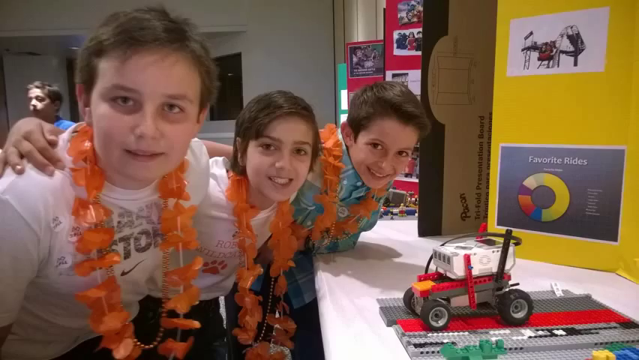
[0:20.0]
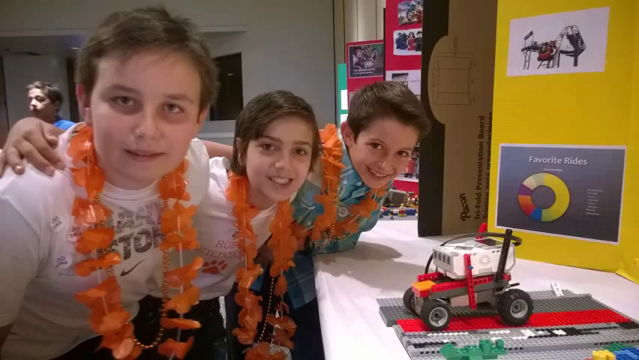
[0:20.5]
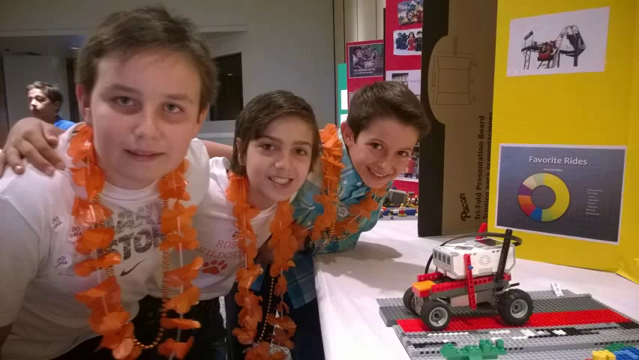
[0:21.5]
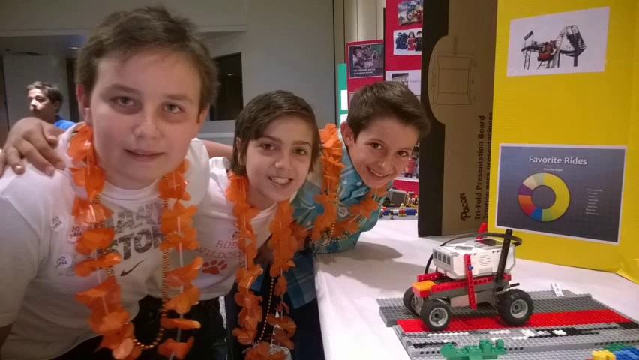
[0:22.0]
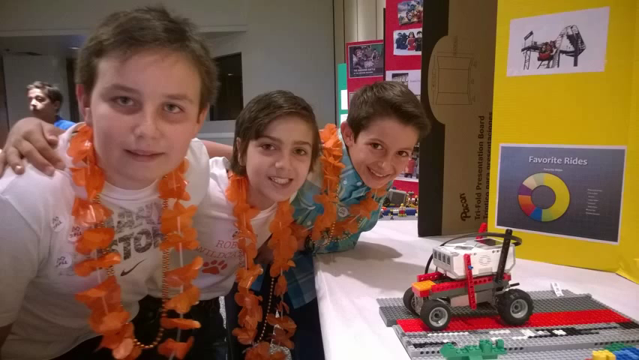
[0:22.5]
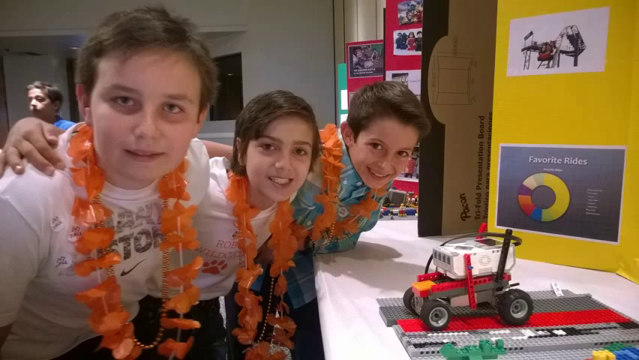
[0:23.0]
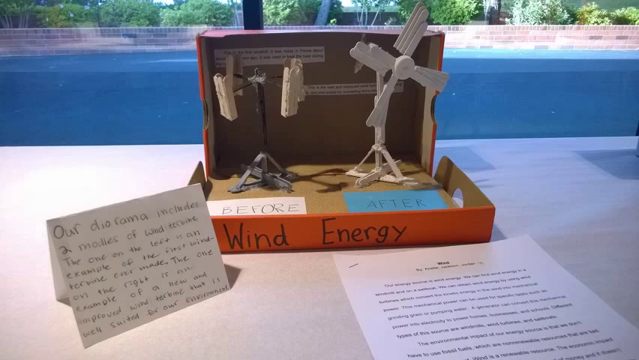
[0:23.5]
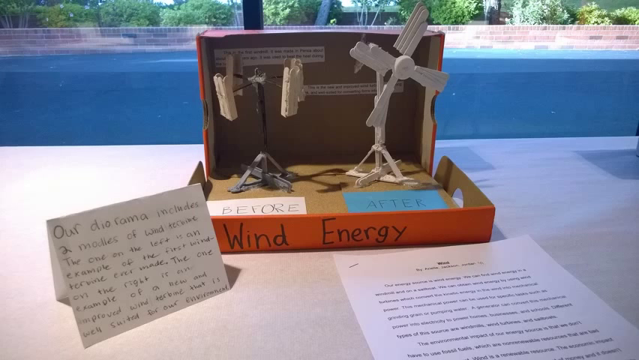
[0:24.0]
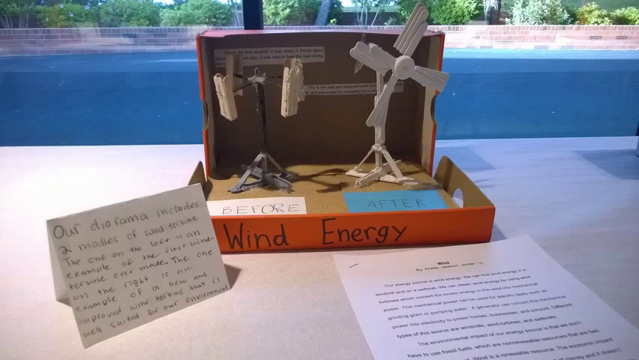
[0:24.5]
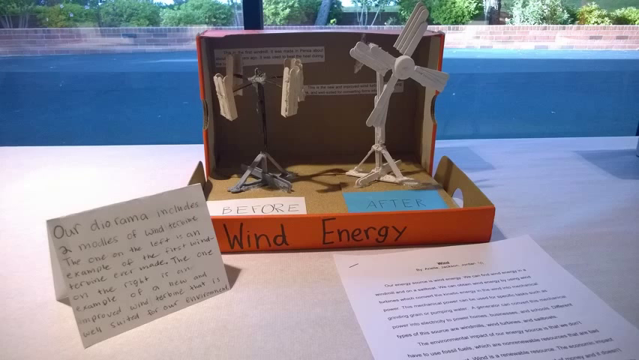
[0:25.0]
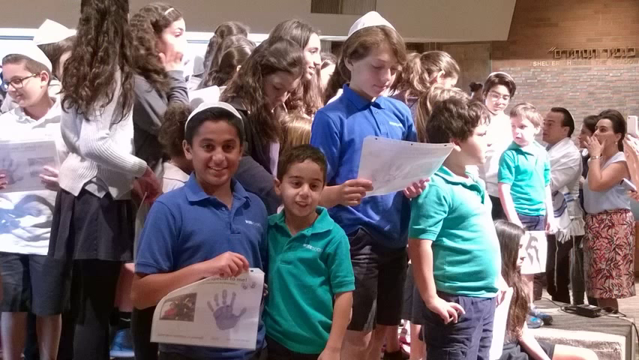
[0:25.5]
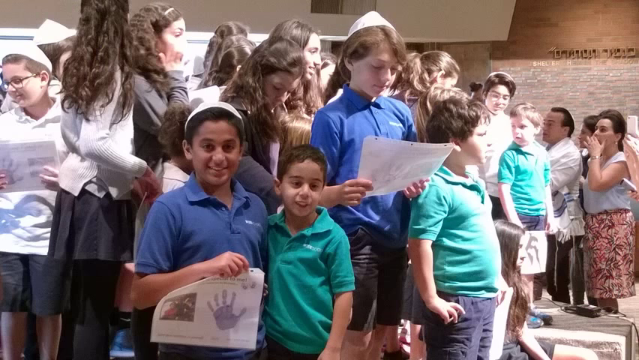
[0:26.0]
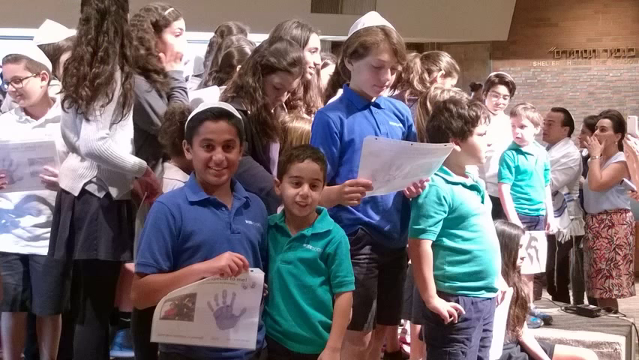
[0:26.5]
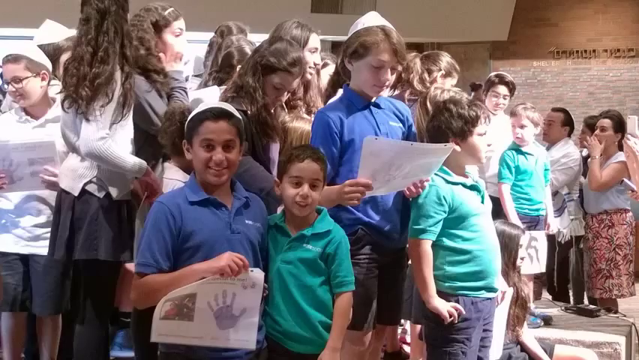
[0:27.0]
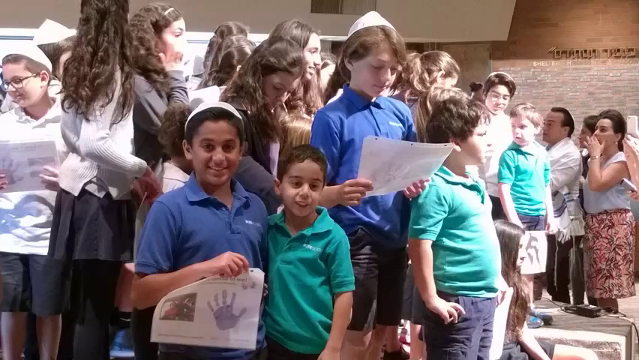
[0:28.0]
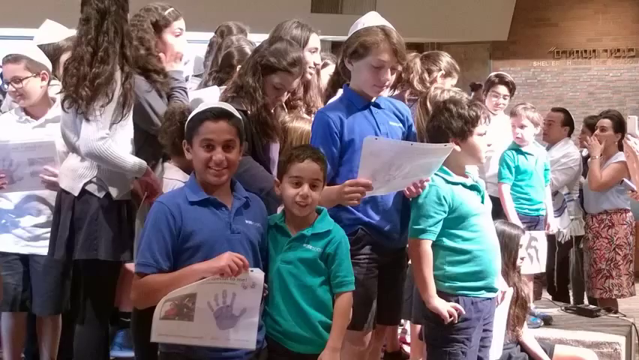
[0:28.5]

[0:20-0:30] A static image shows three kids, probably around 10 to 12. The first two wear white t-shirts with logos on their chests: the one on the left has gray and black text with a Nike logo at the bottom, and the next has red text with a red paw print at the bottom. The third wears a teal-like plaid shirt in teal, various shades of blue, and white. They have their arms around each other's shoulders and lean in, toward roughly five o'clock, but their heads are turned right so they look at the camera. All of them wear orange leis around their necks. The next picture looks like a science fair project set in a box top that appears to be the lid of a Nike shoe box, orange on the rim and upside down, with the opened shoe box visible in the background. The front of the rim reads "wind energy." Inside are two flashcards, a before and an after, the after one blue and the before one white, along with windmills.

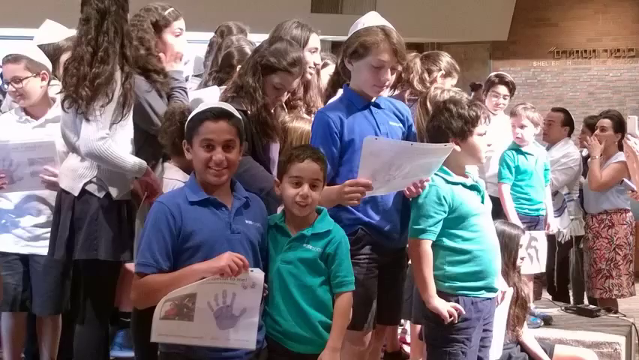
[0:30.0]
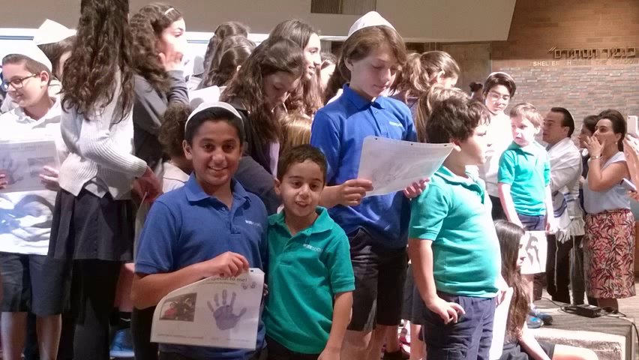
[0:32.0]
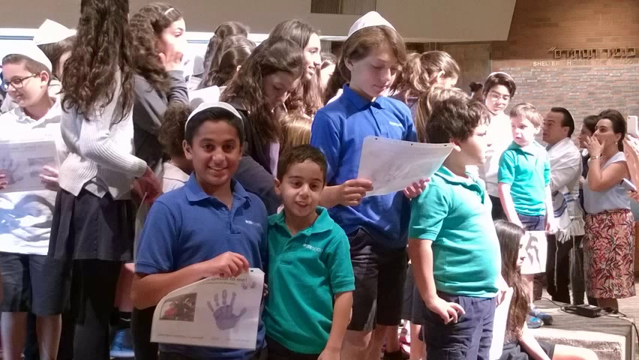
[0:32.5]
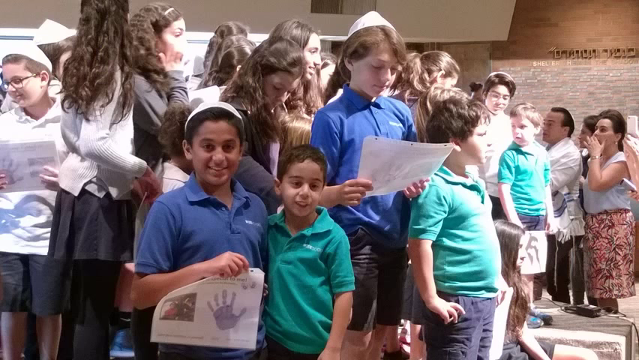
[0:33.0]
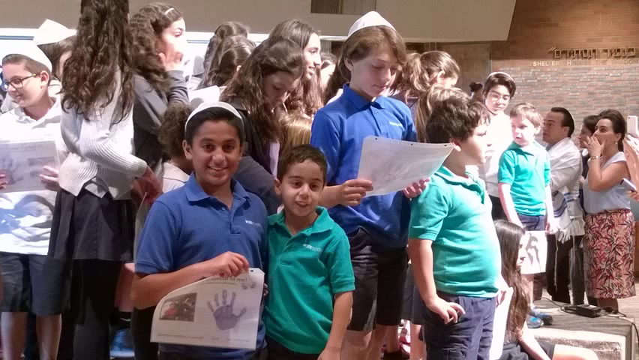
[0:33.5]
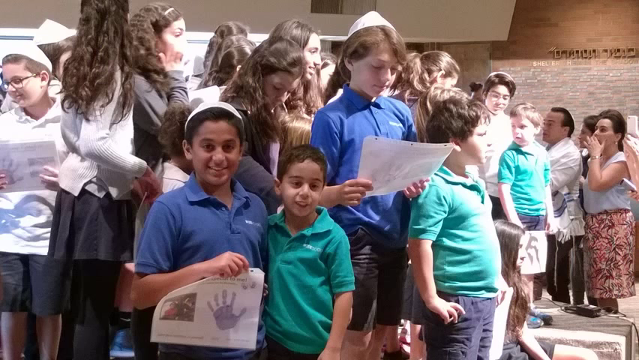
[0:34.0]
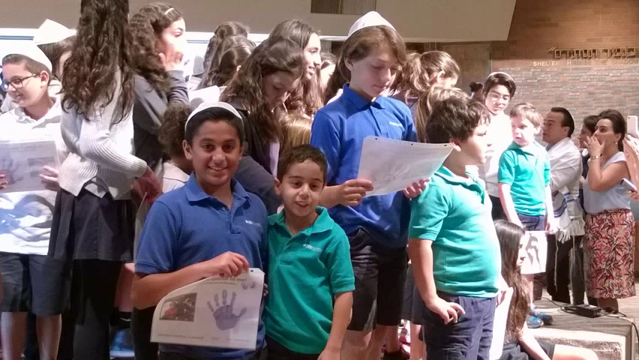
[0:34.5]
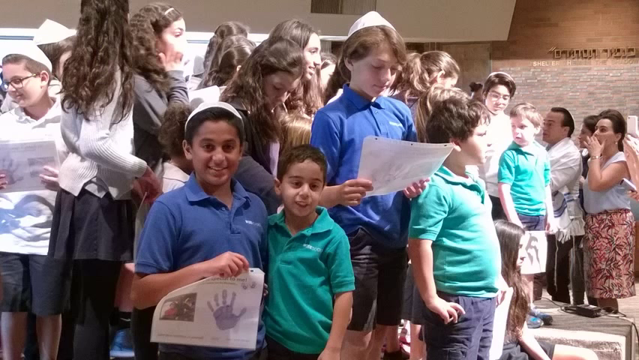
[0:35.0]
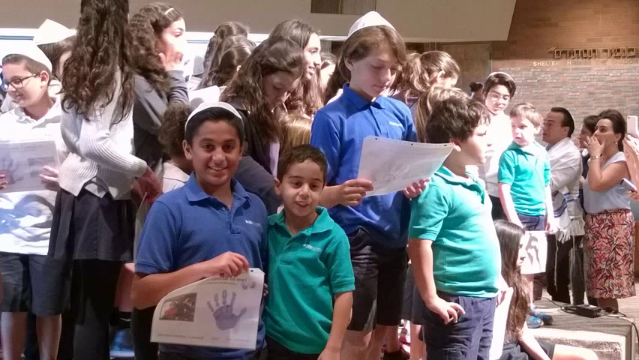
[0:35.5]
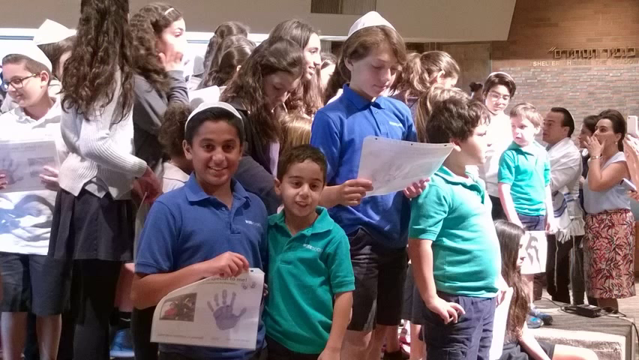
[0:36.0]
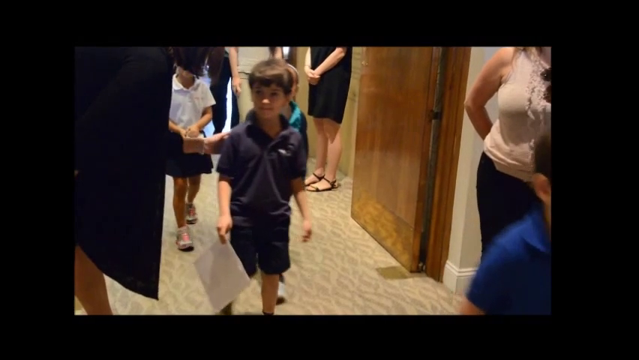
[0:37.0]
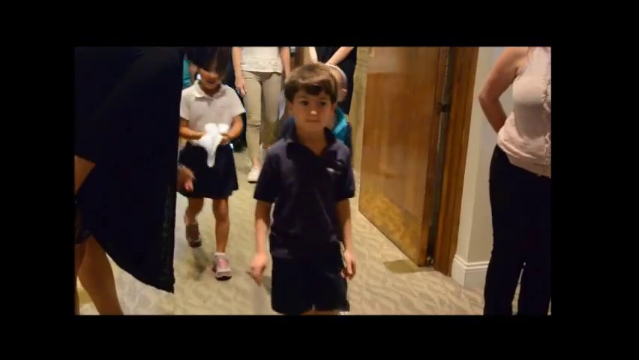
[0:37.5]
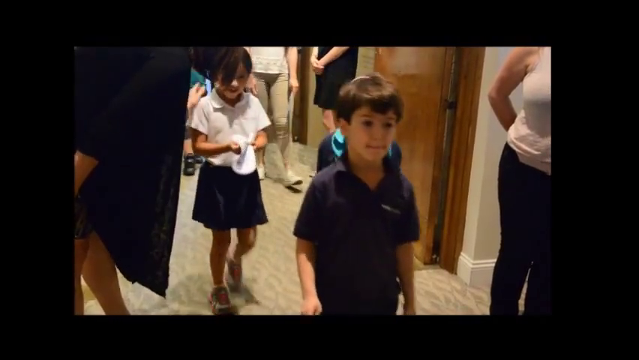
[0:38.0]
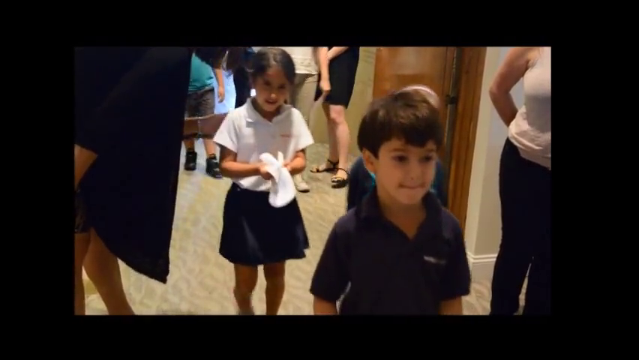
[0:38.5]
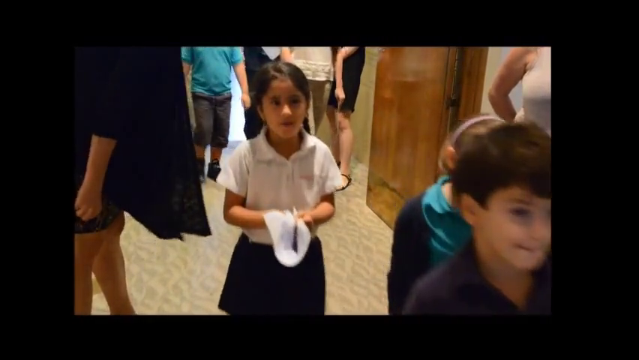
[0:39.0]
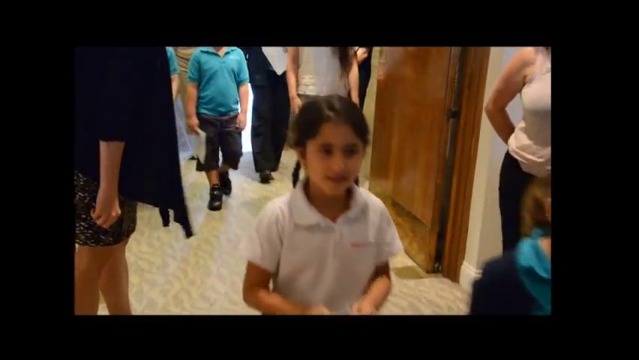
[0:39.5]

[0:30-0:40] A static image shows a large group of kids, probably of various ages from about six to maybe 12. In the foreground are two kids in polos, both with what looks like the same words on the left of the chest, too blurry to read. The one on the left wears a medium blue polo and the one on the right a teal polo. Further down the line are other rows of kids in similar polos; moving right there is one medium blue, then two teals. A row behind them seems to be girls in long-sleeved dresses that are black on the bottom and white on the top. The video then switches to footage of kids of about the same age group and similar attire walking in from the upper left toward the lower right: a boy in a darker polo walks in, then a girl in a teal polo who looks like she has some sort of shawl over it.